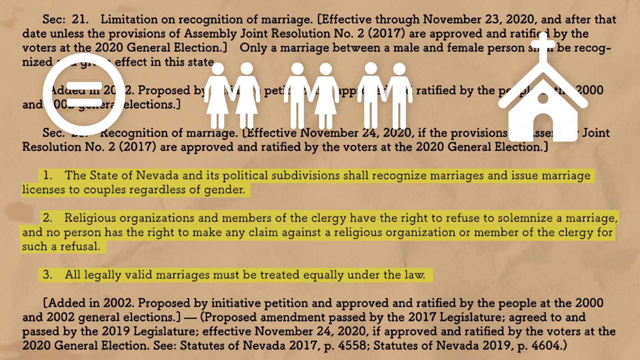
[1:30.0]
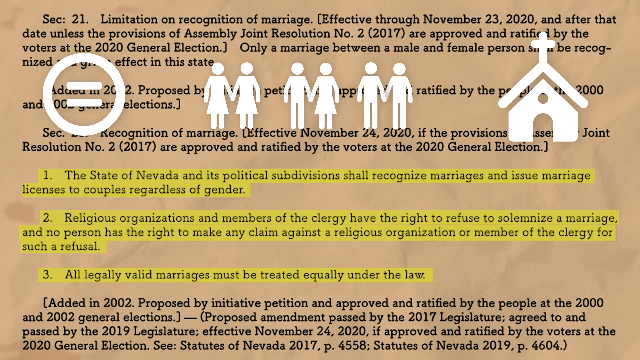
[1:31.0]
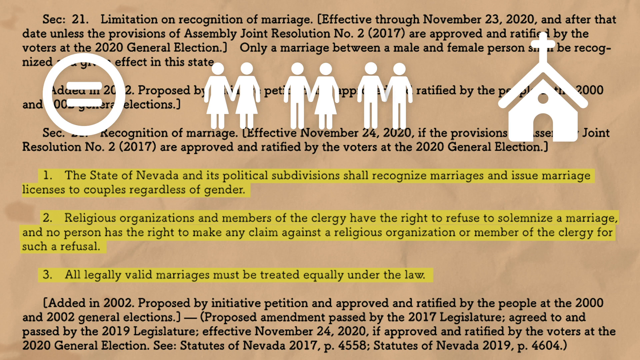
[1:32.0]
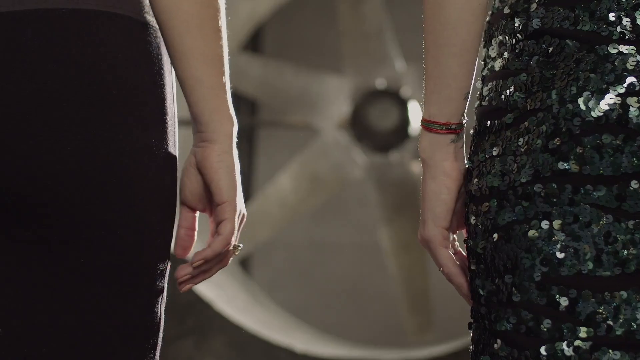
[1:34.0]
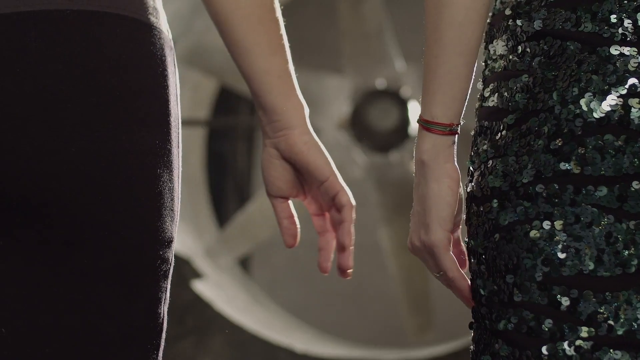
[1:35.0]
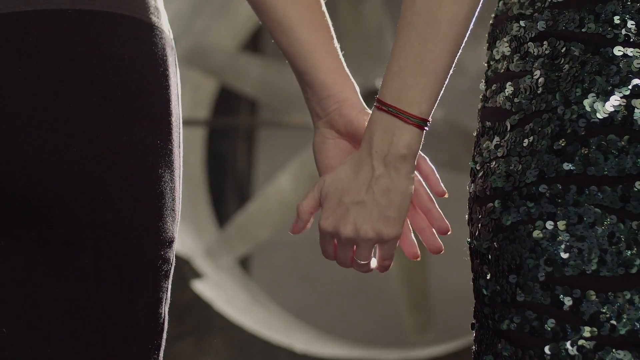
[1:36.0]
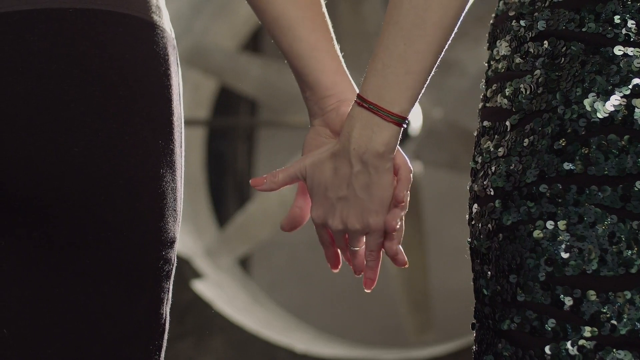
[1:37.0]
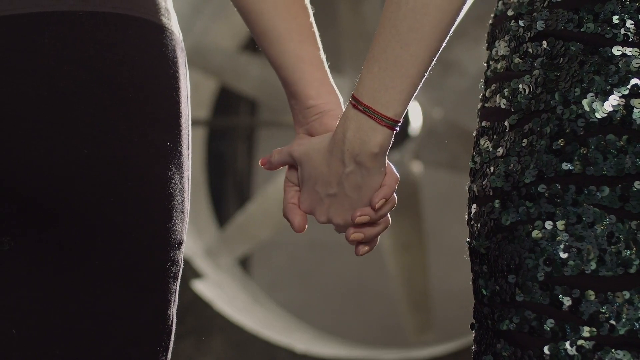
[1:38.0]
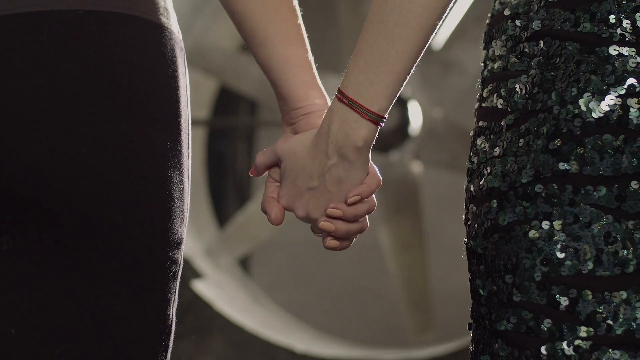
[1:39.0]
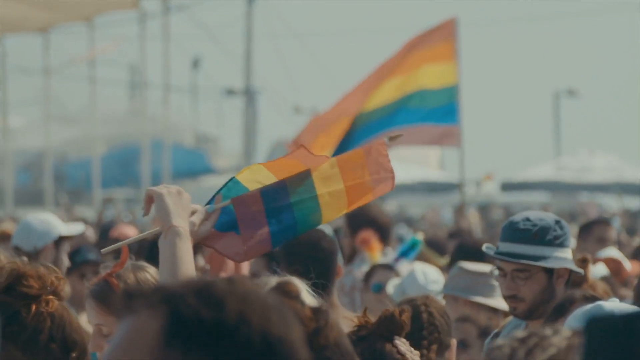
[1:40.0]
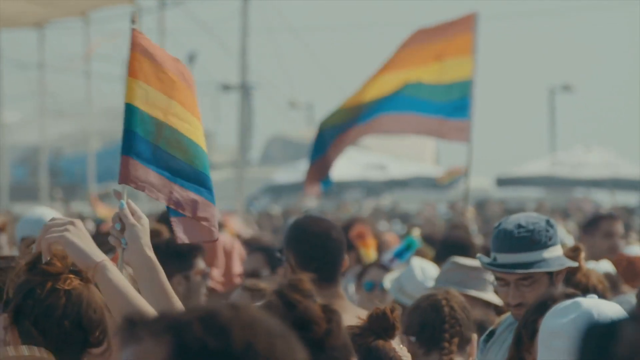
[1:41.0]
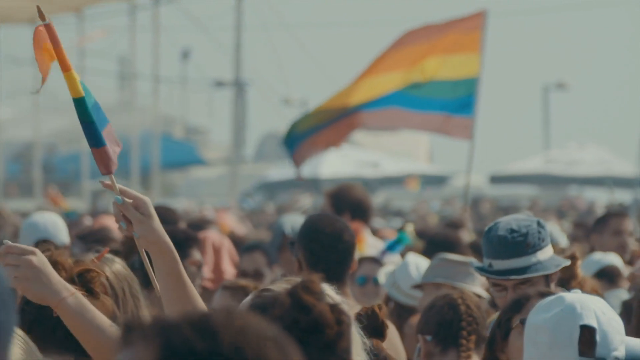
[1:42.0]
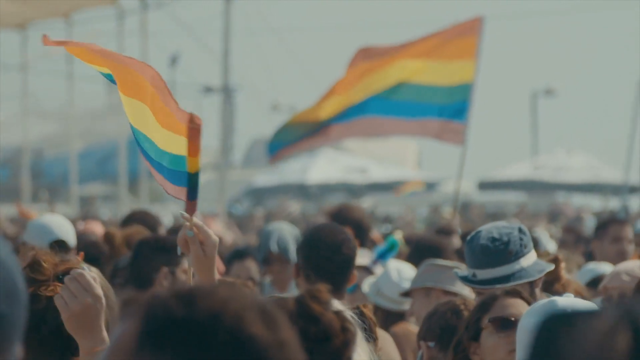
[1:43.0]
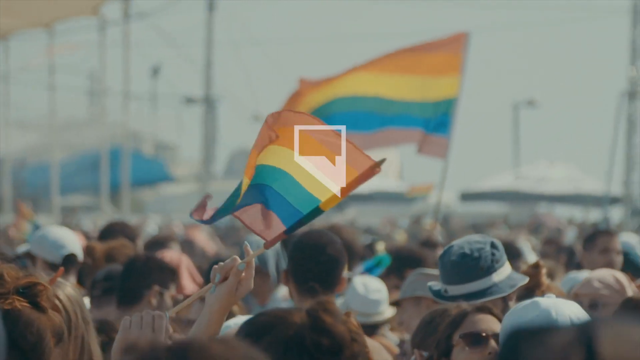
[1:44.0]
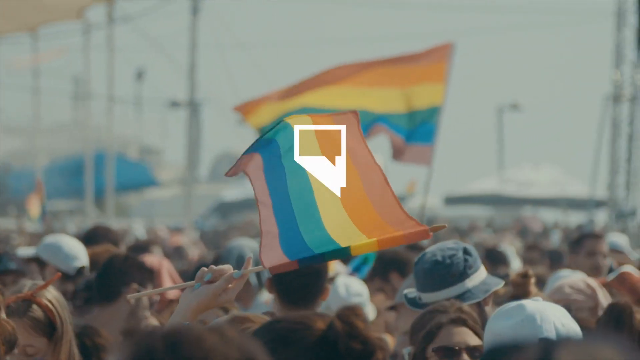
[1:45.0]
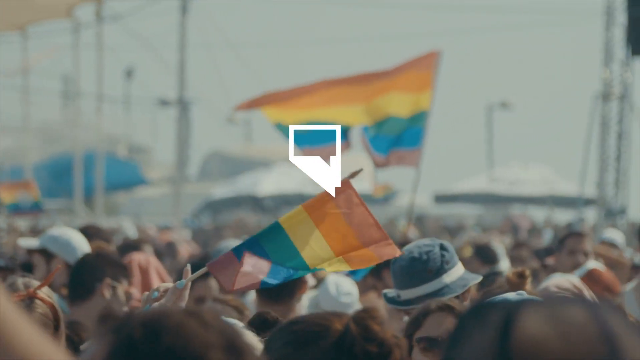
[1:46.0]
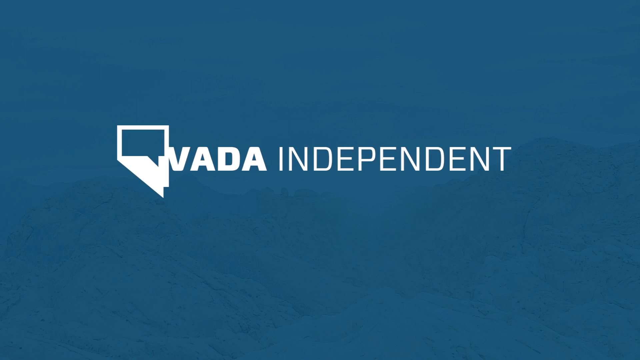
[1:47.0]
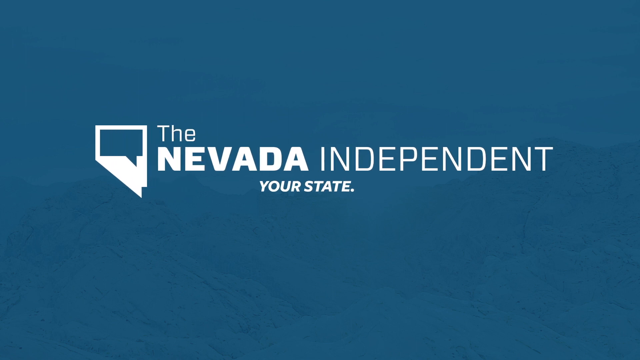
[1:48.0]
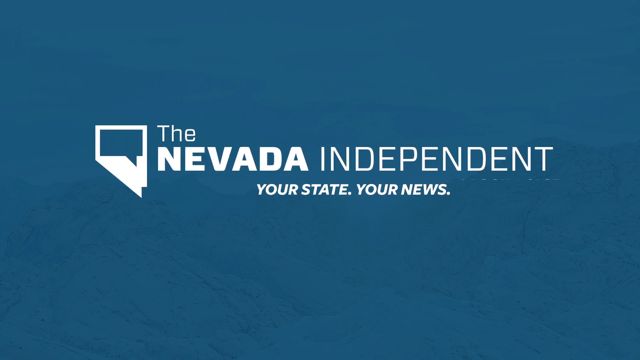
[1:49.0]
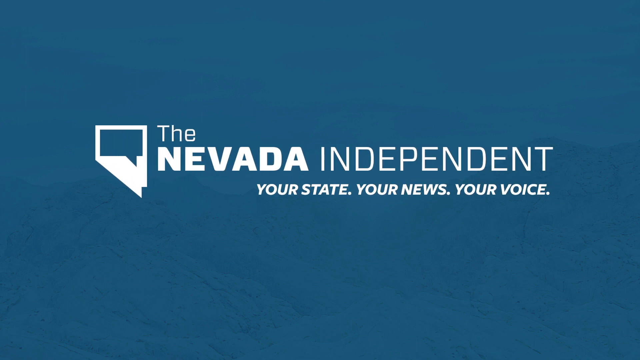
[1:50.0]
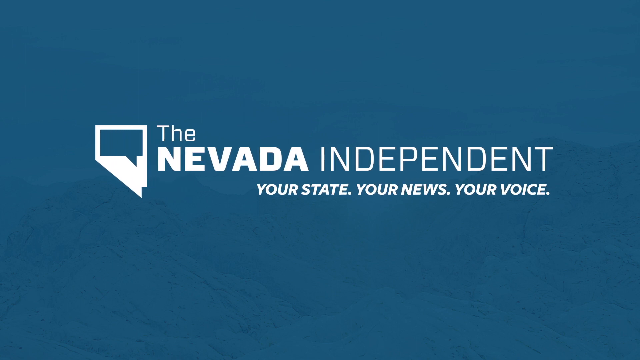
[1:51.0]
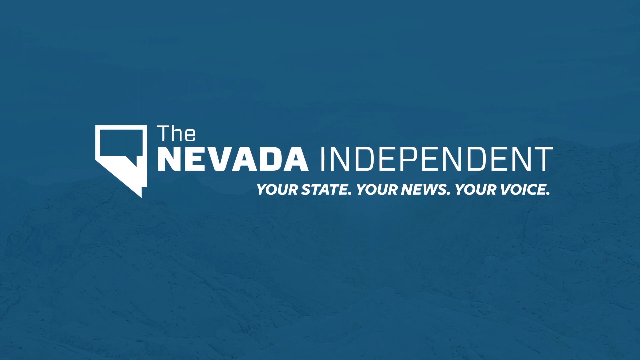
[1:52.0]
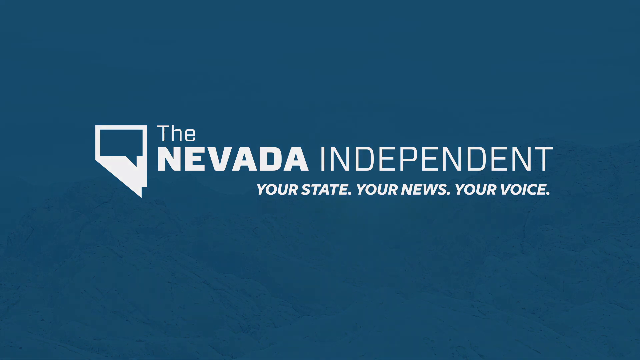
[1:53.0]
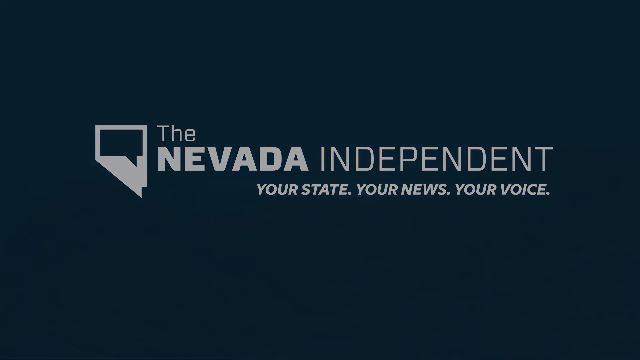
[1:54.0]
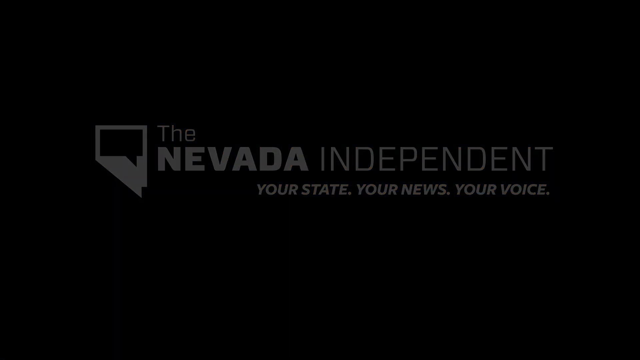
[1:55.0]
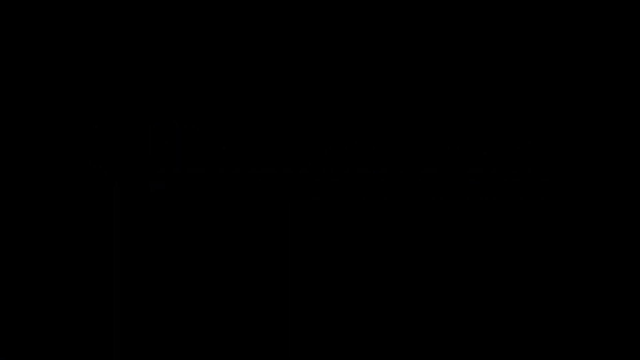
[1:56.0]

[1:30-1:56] Three symbols are shown. First there is an equal sign, then three symbols of people standing together: the first a female and a female, the second a male and a female, and the third a male and a male. Lastly there is a church symbol. Parts of the document are highlighted in yellow: the first, about the state of Nevada and its political subdivisions, reads "shall recognize a marriage and issue marriage and licenses to couples regardless of gender"; below it, "religious organizations and members of the clergy have the right to refuse to solemnize a marriage and no person has the right to make any claim against a religious organization or member of clergy for such a refusal"; and lastly, "all legally valid marriages shall be treated equally under the law." Then what appears to be a reunion between two women holding hands is shown, and pride flags are visible at a protest.